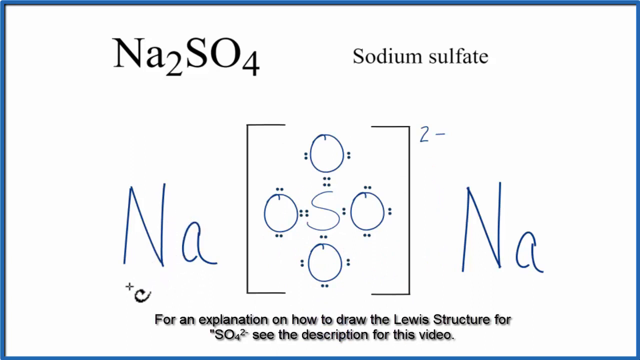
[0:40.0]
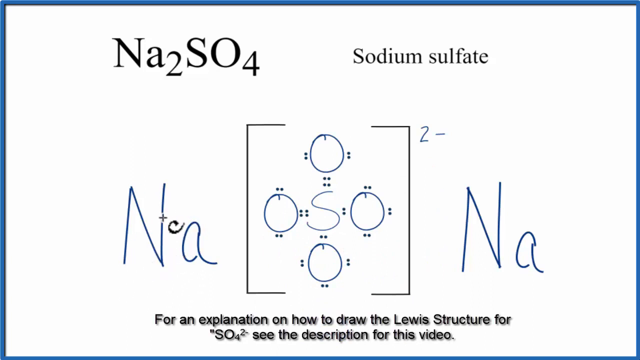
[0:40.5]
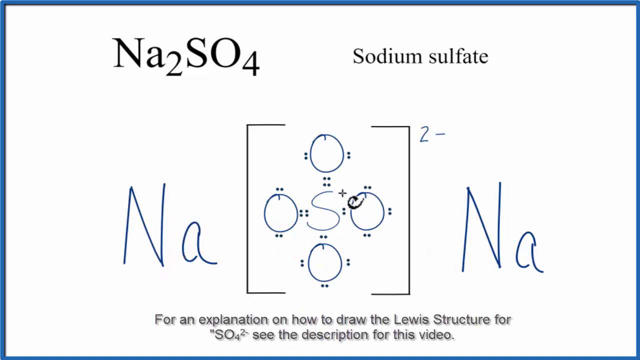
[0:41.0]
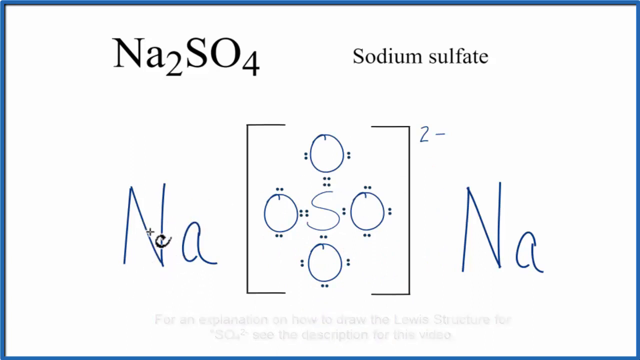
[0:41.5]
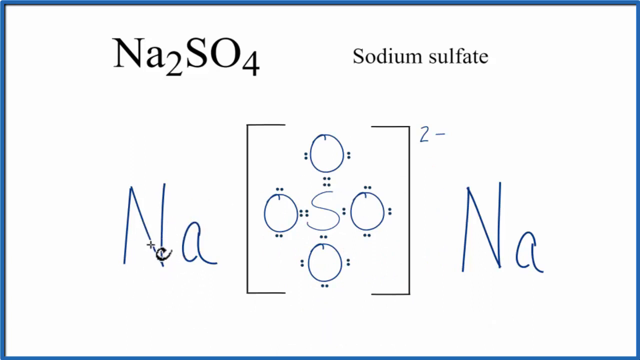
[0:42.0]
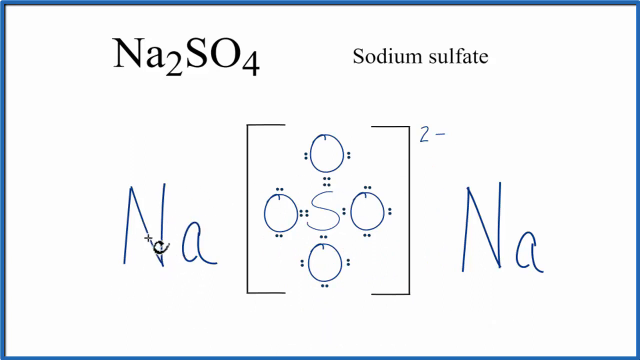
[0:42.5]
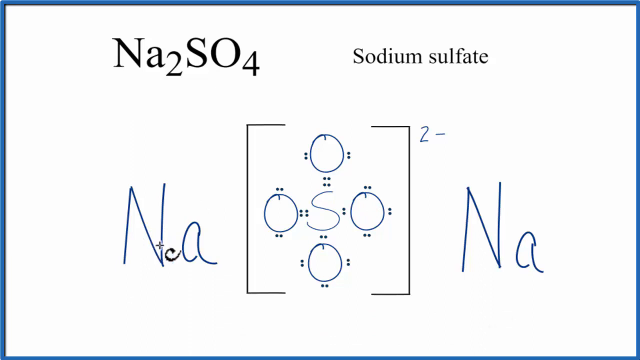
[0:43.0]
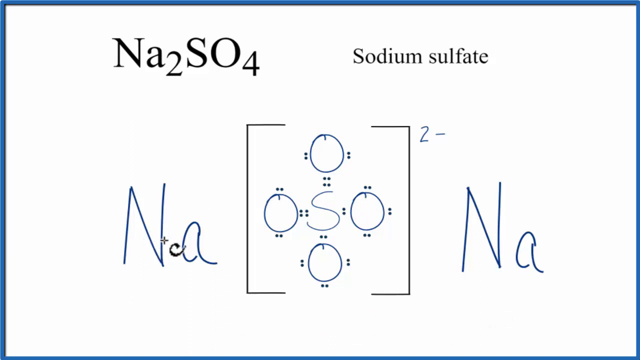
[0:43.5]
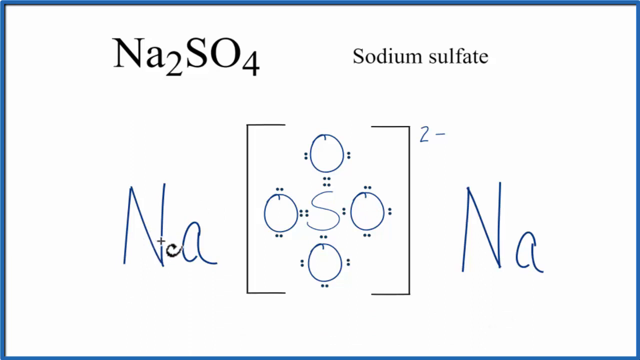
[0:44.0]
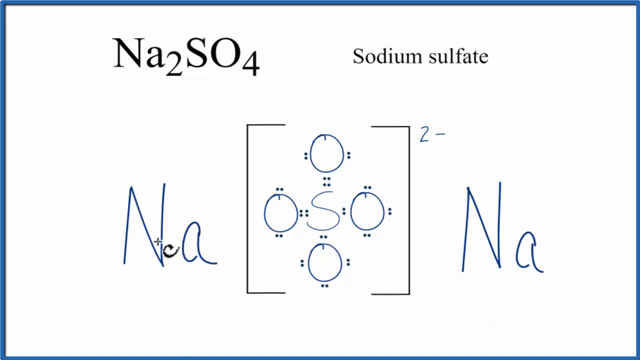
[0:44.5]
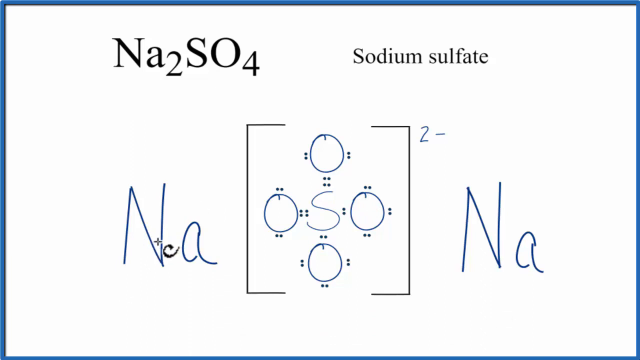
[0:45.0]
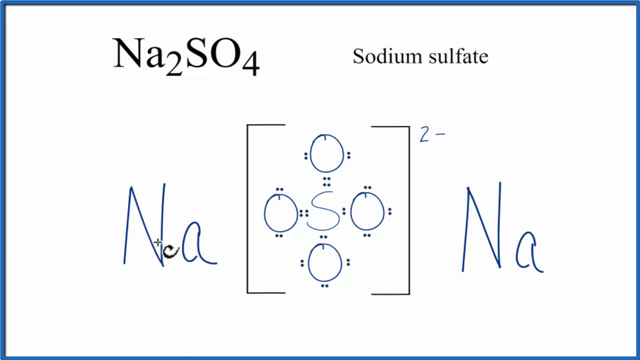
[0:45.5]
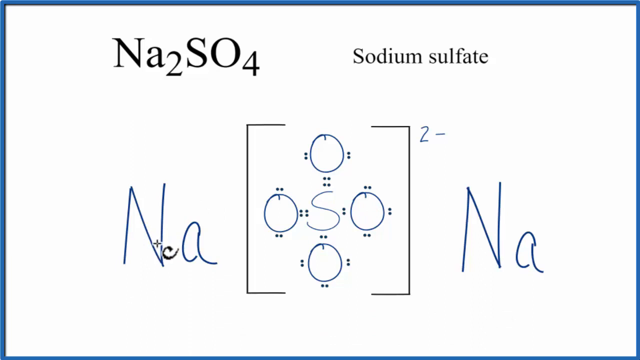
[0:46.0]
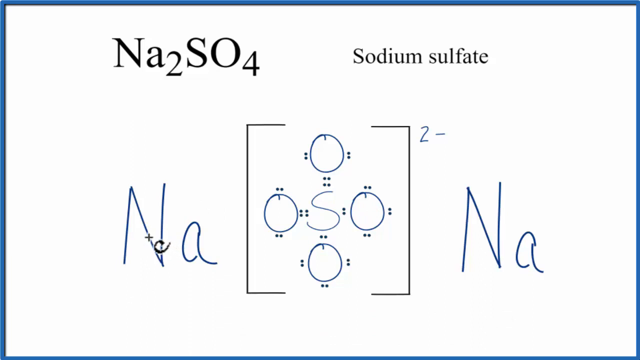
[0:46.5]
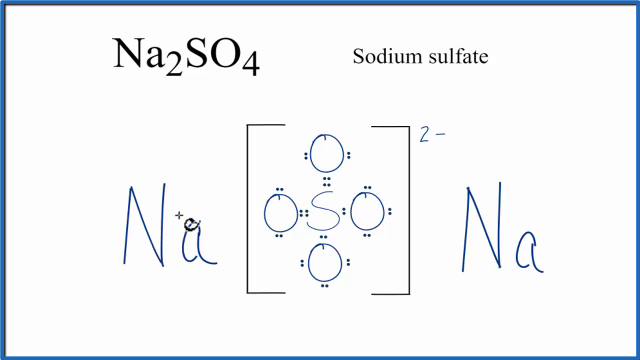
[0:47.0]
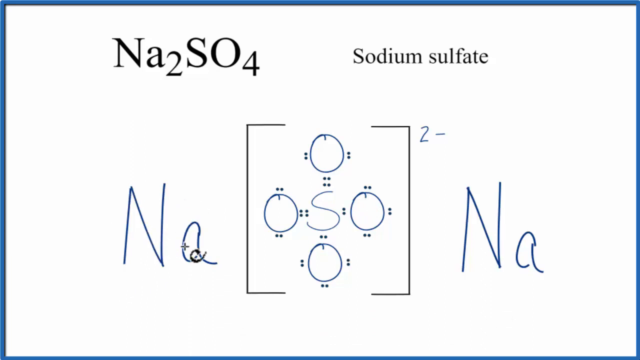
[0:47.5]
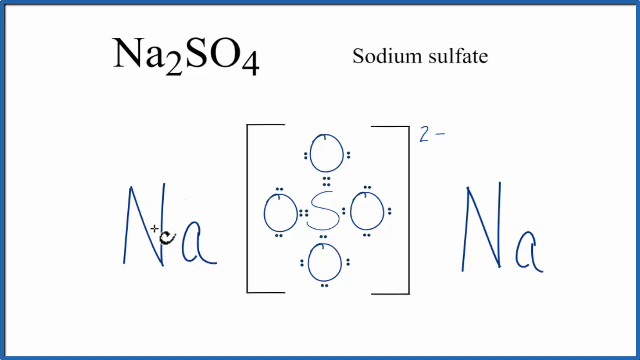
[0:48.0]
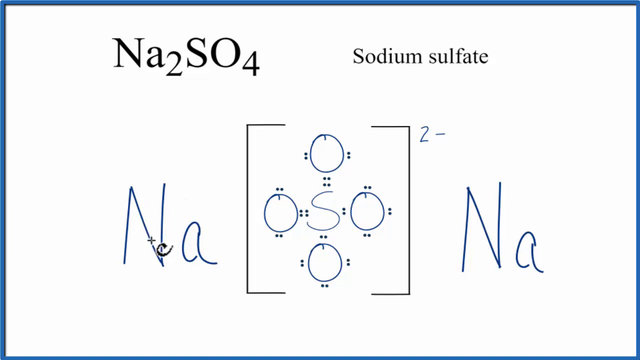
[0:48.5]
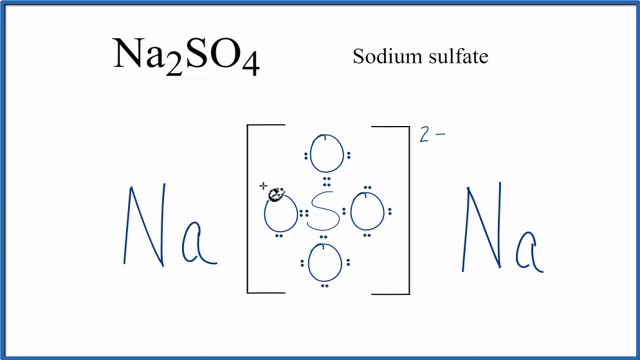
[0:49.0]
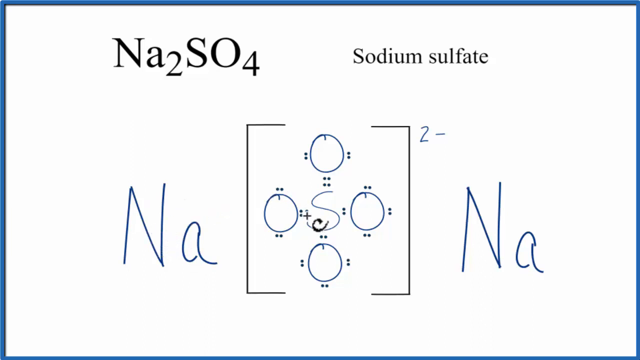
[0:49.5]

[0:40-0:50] The presenter appears to be explaining how the two sodium ions interact with the sulfate ion. The same text as before is still on screen, and the background is unchanged. The diagram is apparently still black, while the Na is still blue.